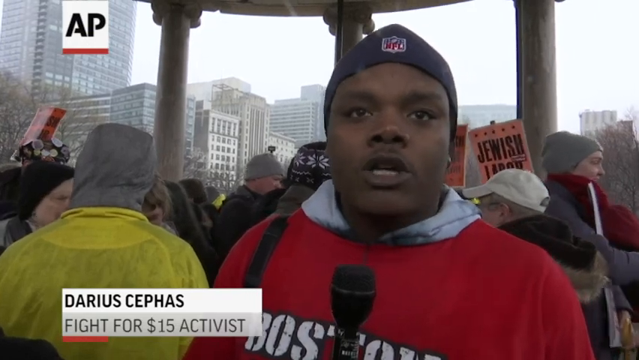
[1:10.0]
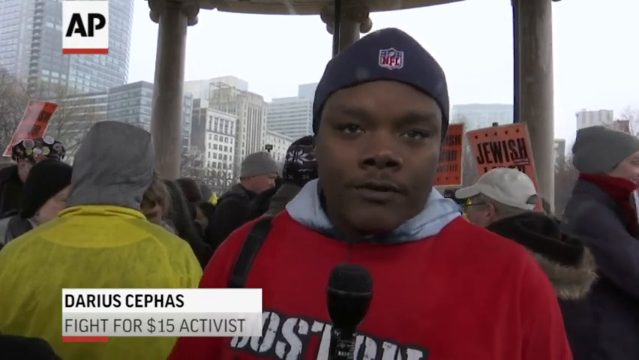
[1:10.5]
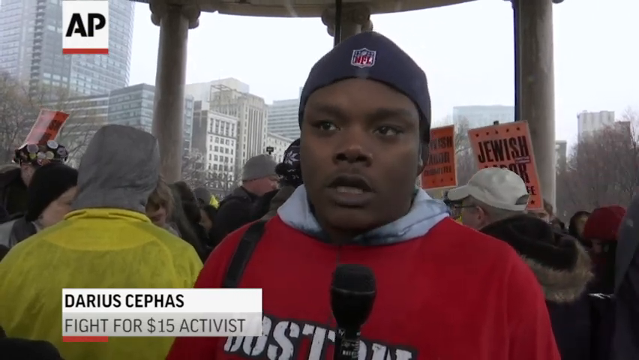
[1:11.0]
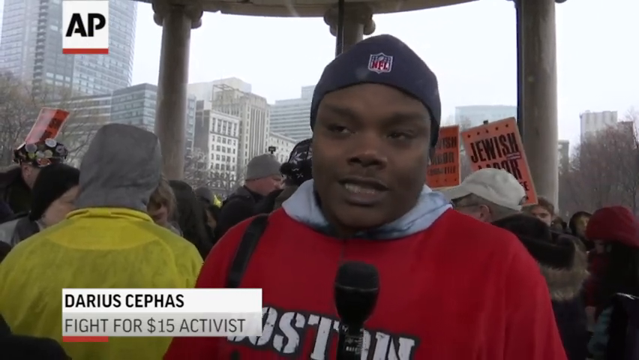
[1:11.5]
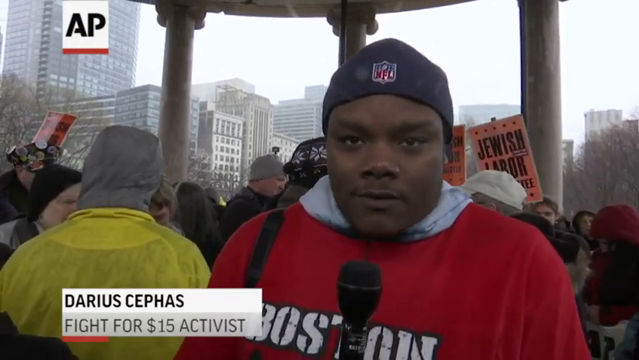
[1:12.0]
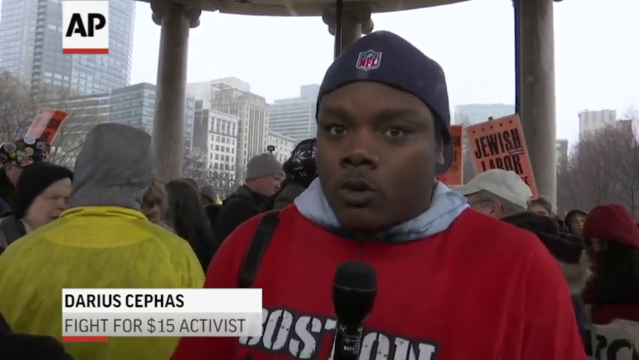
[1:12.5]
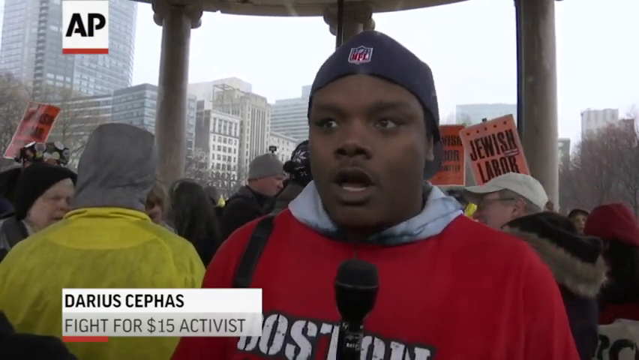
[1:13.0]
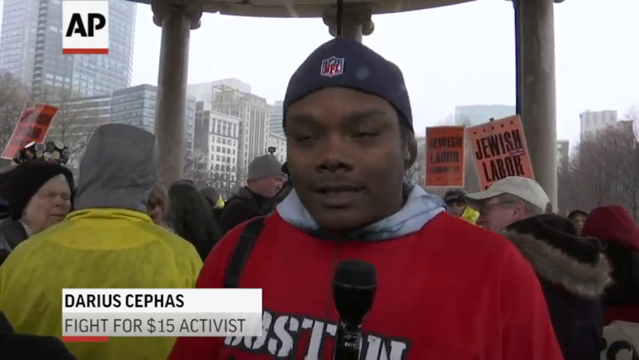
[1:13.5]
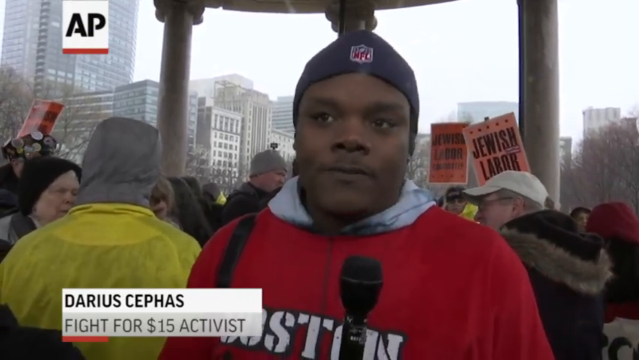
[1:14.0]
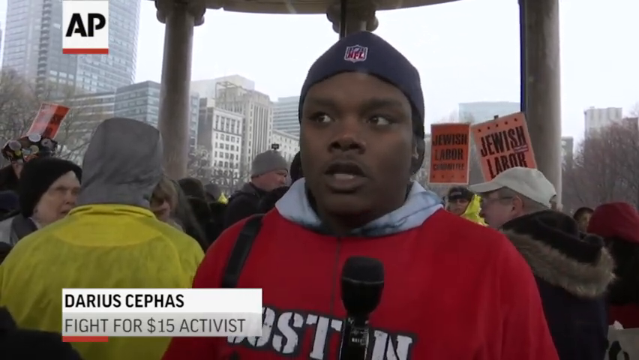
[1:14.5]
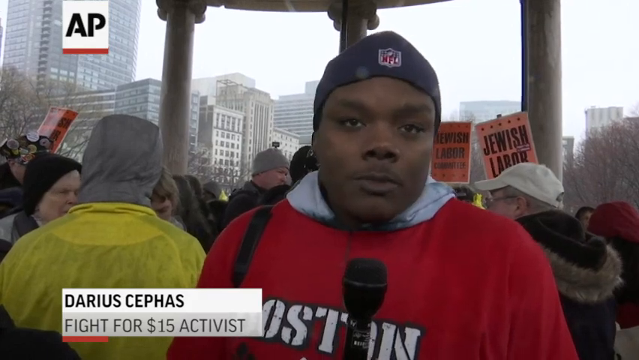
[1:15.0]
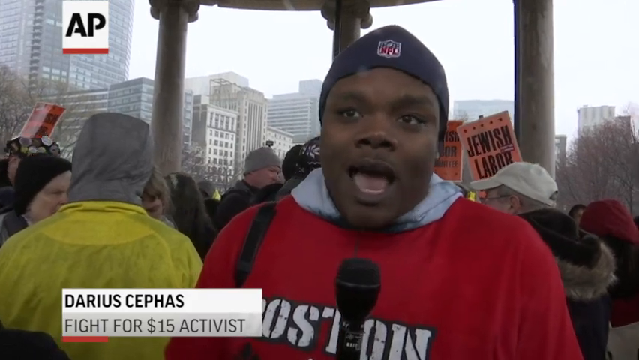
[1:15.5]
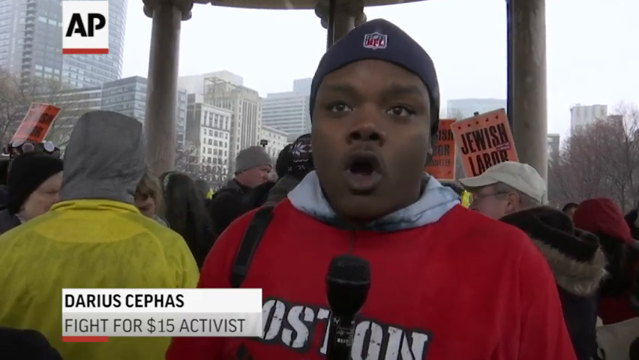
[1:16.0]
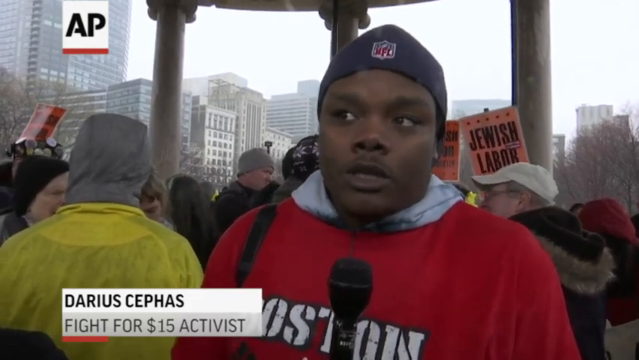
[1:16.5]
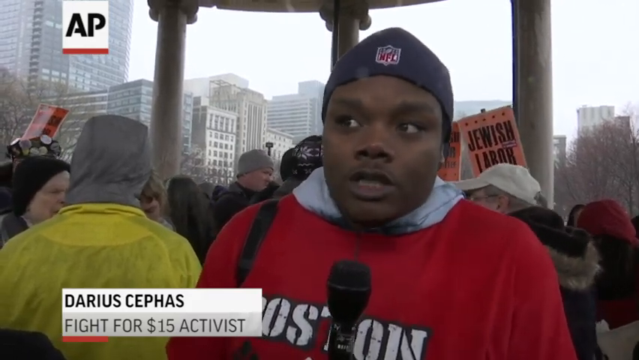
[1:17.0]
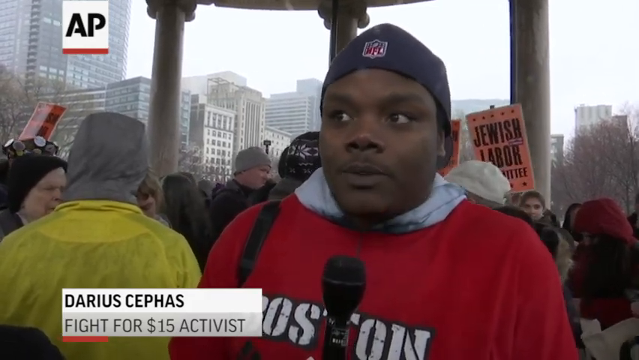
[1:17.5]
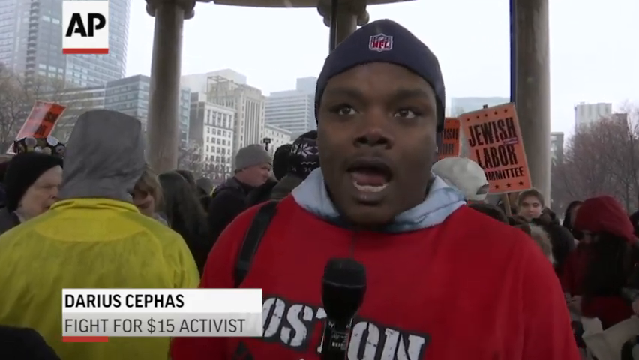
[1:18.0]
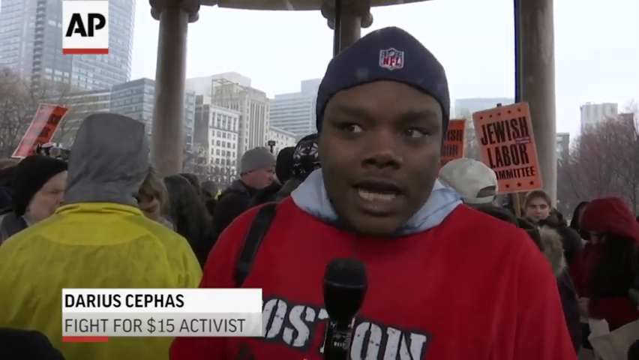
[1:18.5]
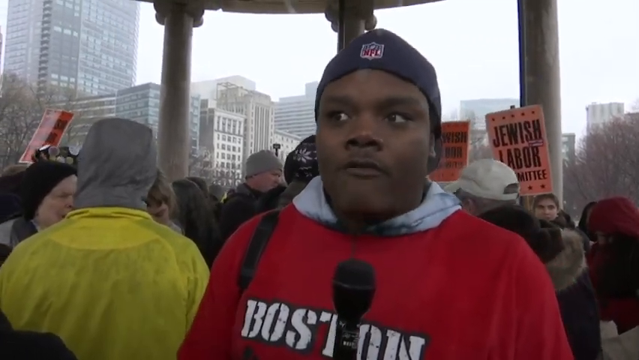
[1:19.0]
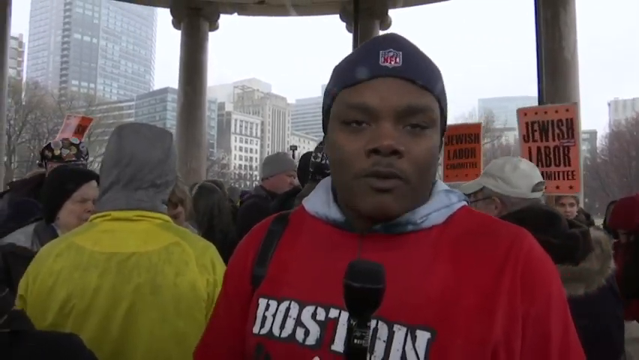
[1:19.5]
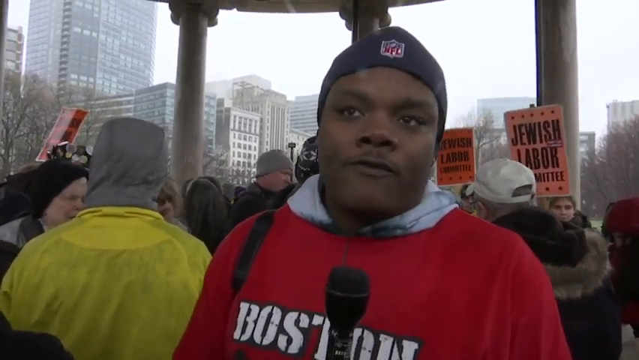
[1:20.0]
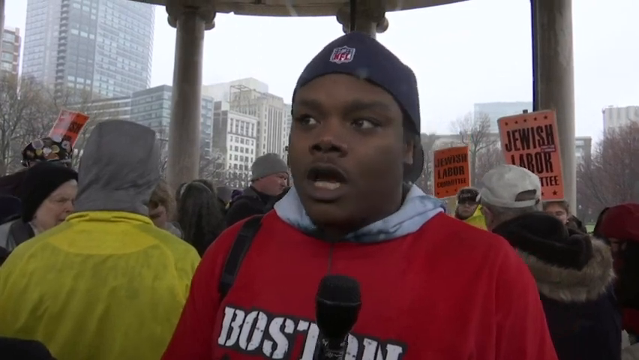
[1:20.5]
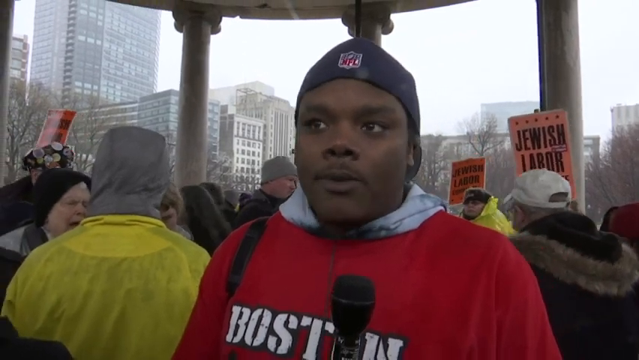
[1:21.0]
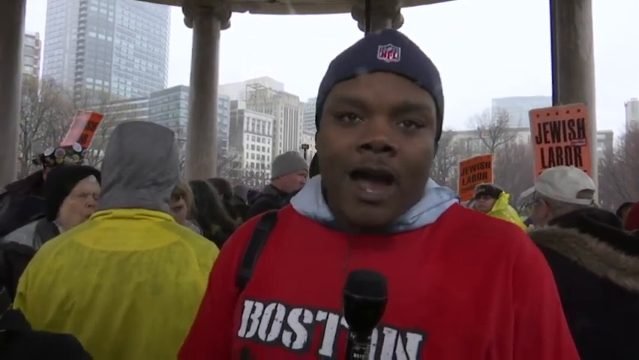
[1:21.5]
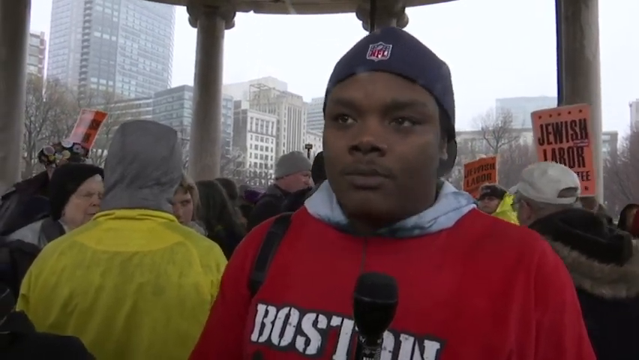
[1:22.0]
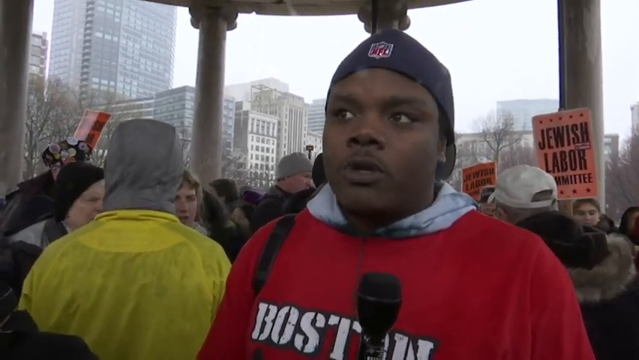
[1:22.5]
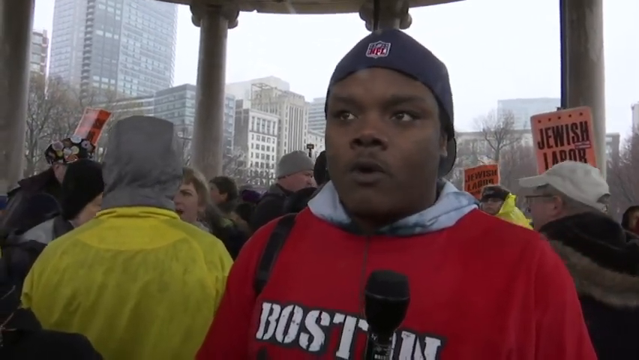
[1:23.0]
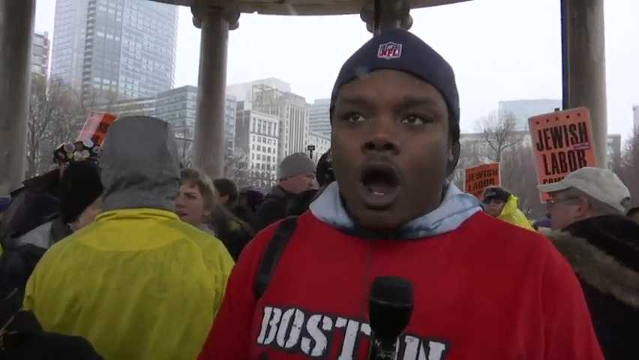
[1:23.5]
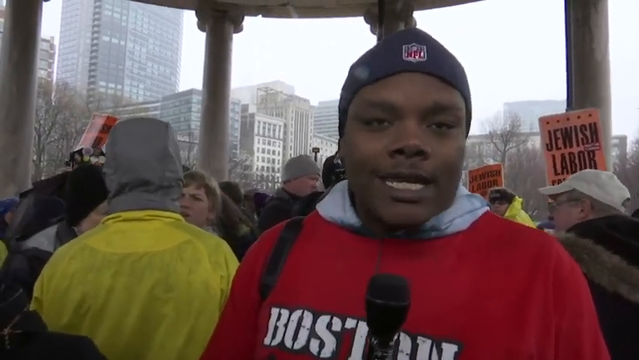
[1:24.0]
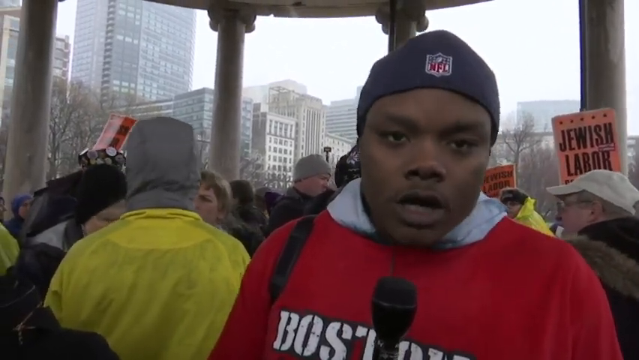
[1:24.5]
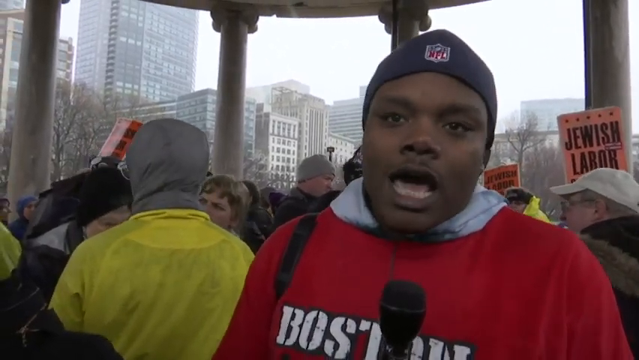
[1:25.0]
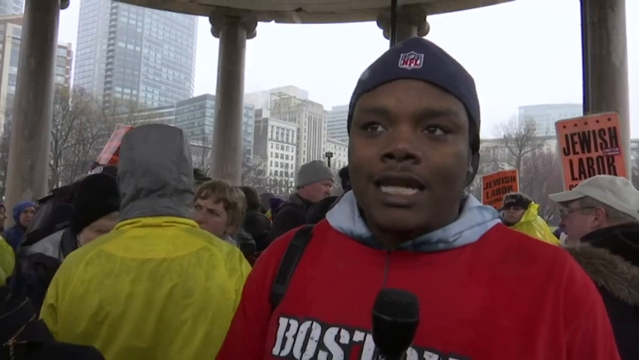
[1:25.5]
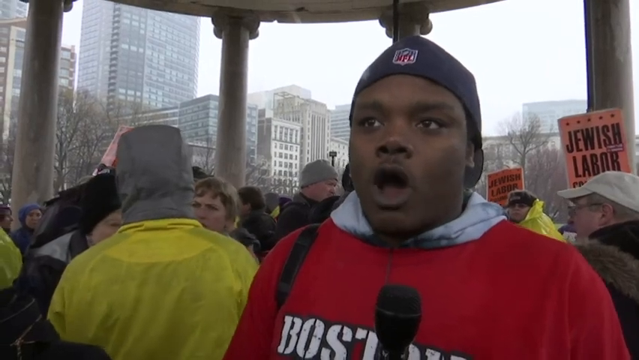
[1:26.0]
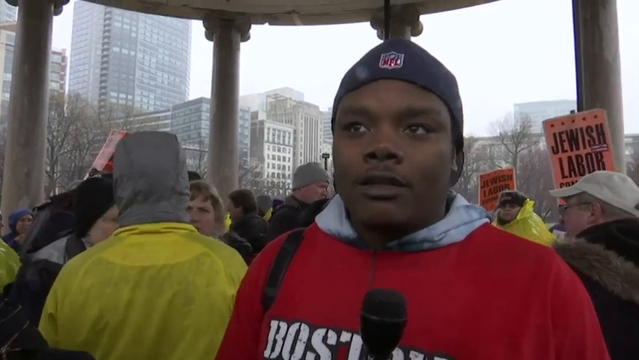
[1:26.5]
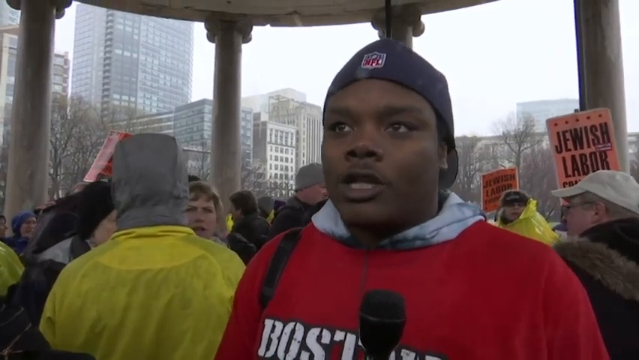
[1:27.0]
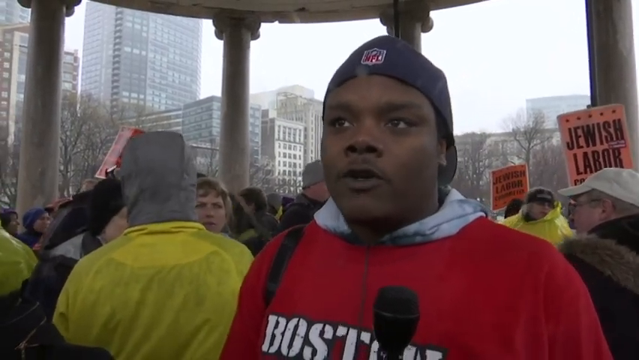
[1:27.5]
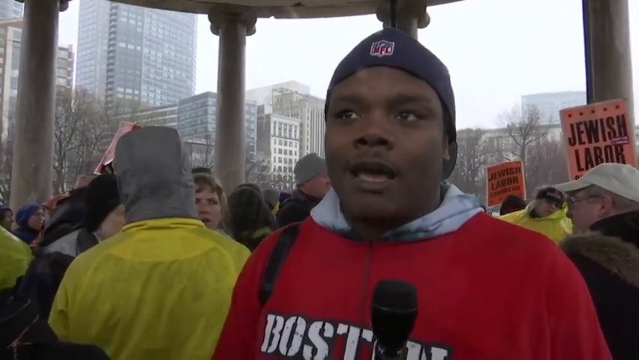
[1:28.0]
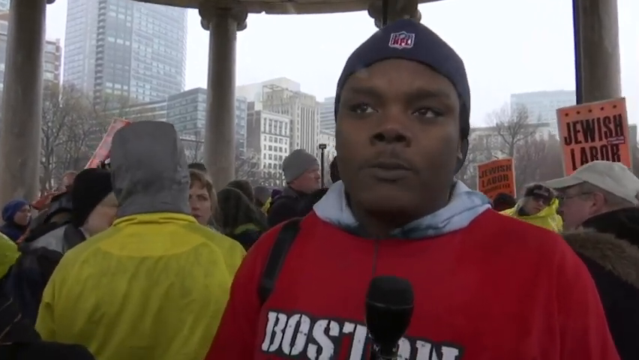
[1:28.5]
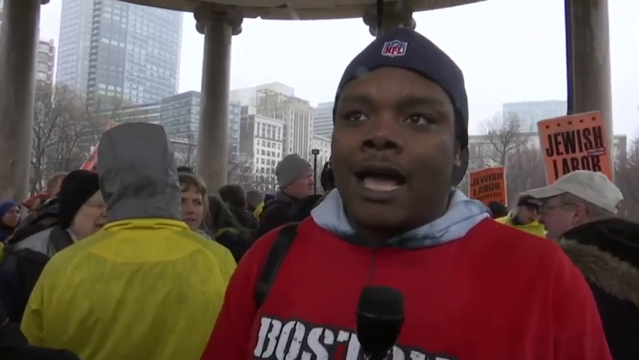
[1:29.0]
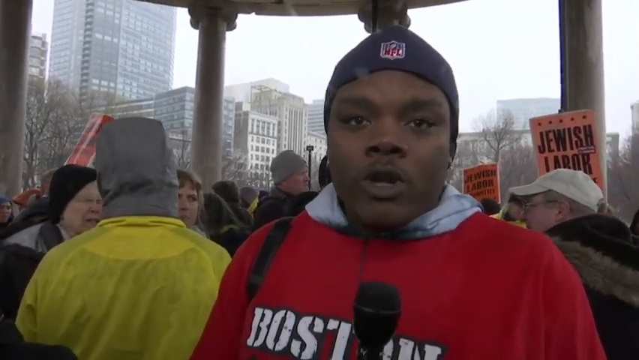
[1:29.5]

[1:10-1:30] In this Associated Press video, people march and protest for fair wages. Brown and Black Lives Matter posters are visible, along with signs about fighting for a fair wage of $15. Darius Cephas, a Black man, is interviewed; he wears a backwards blue NFL hat, a red shirt with "Boston" on it, and a hoodie underneath. A microphone is below him, and text reads "fight for 15 activists". Orange Jewish labor committee signs are behind him. Everyone is gathered under the building with pillars, still outdoors but in a covered area out of the rain. They wear very warm clothing, with lots of hats, thick jackets and winter attire, and it looks cold outside. Some umbrellas are visible.